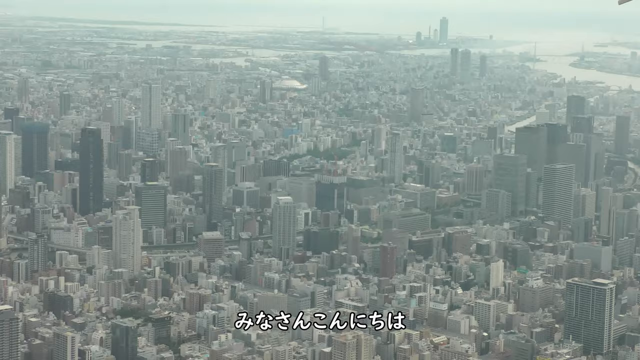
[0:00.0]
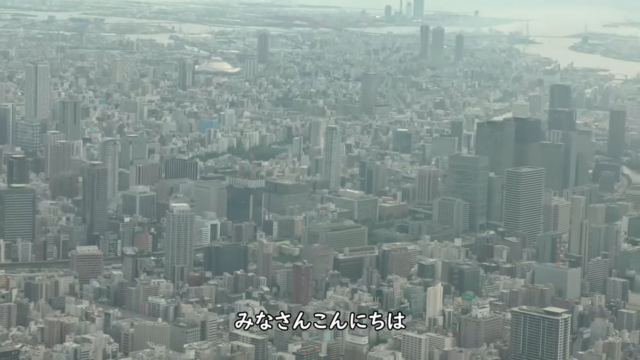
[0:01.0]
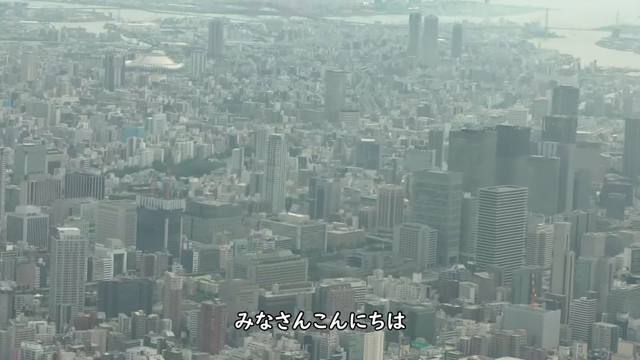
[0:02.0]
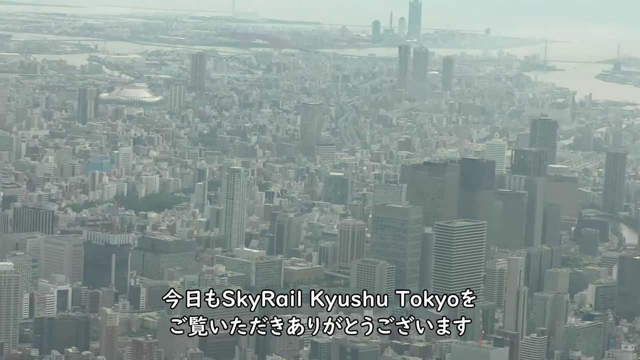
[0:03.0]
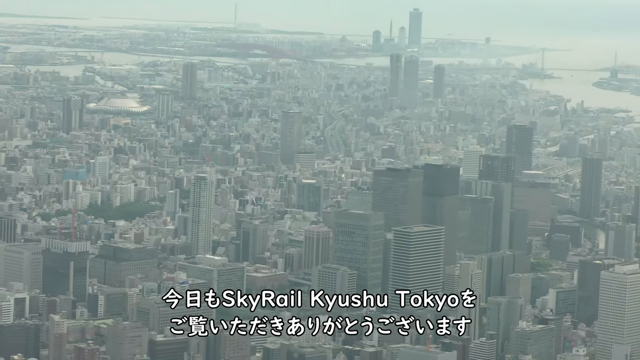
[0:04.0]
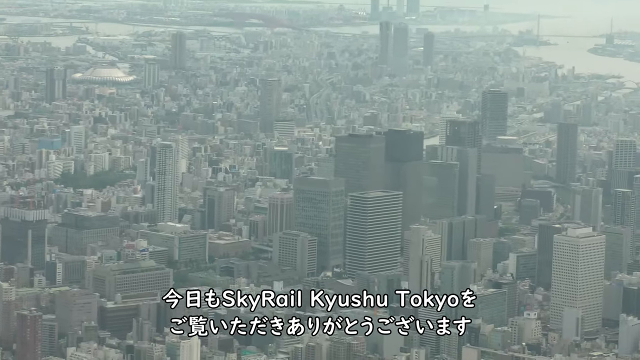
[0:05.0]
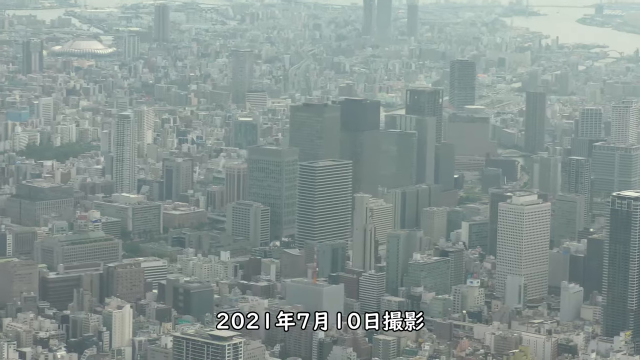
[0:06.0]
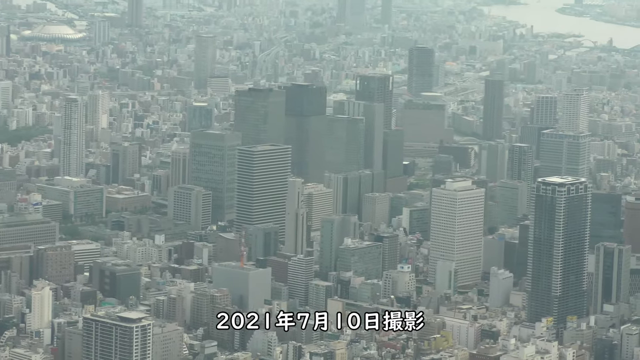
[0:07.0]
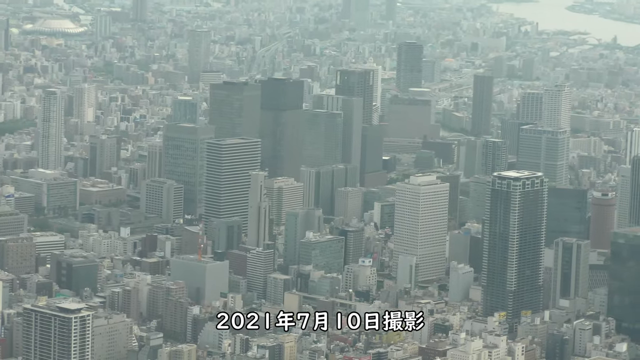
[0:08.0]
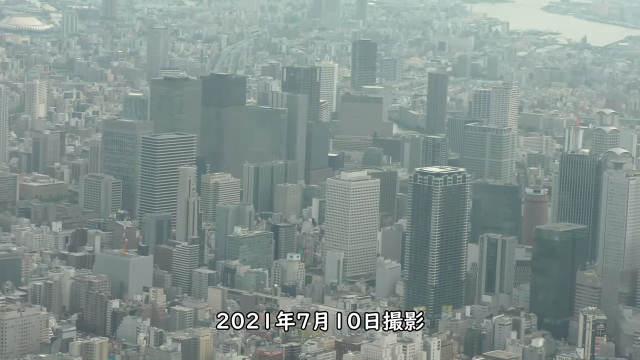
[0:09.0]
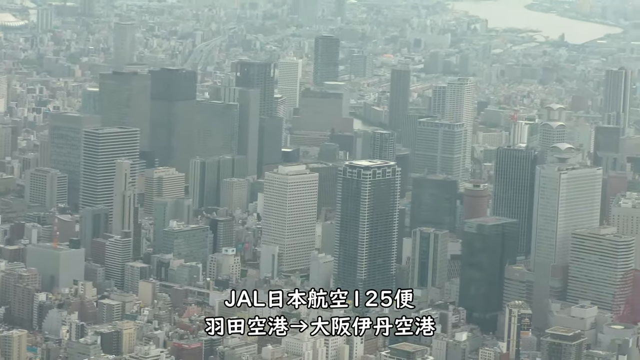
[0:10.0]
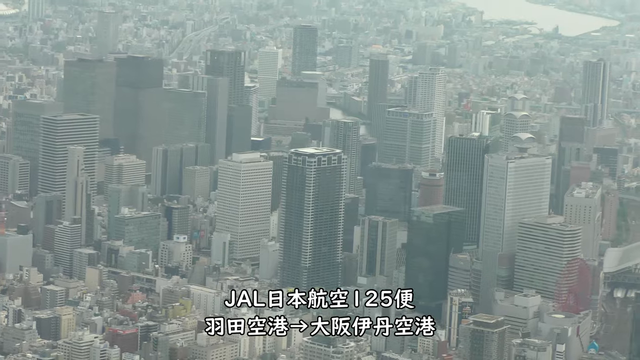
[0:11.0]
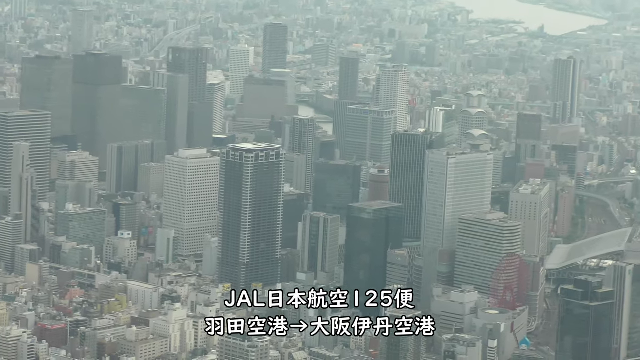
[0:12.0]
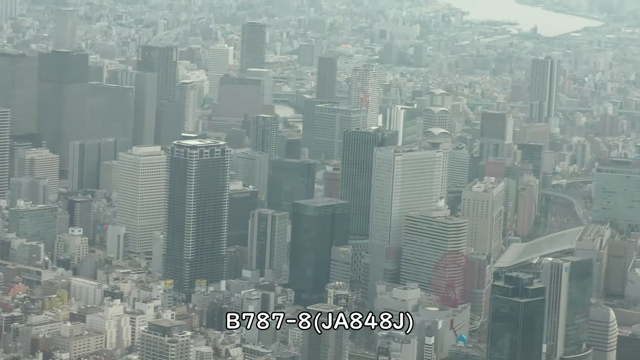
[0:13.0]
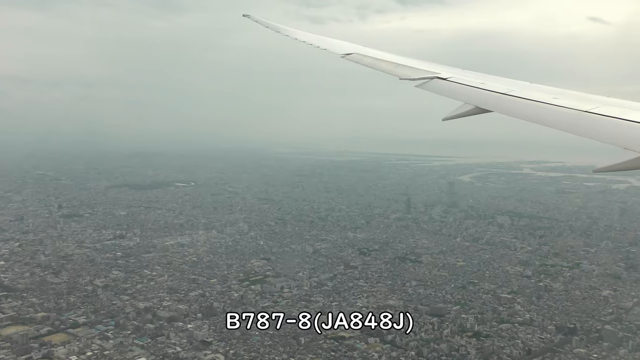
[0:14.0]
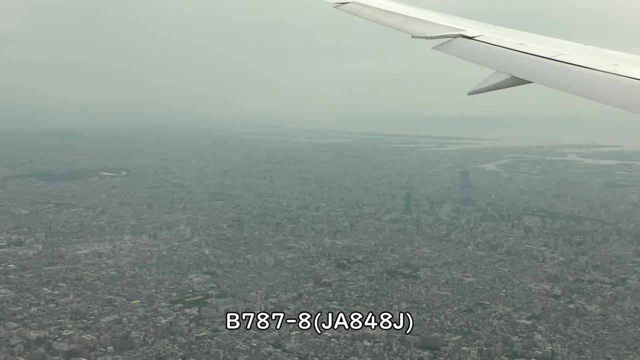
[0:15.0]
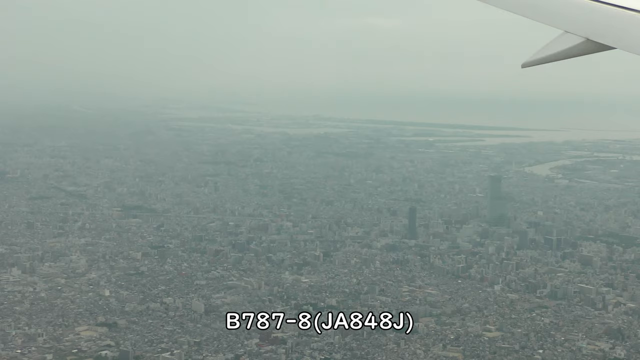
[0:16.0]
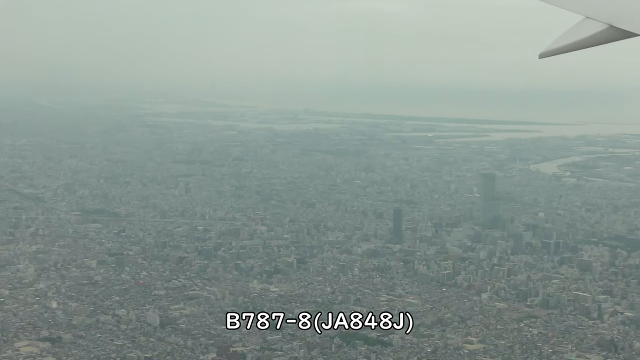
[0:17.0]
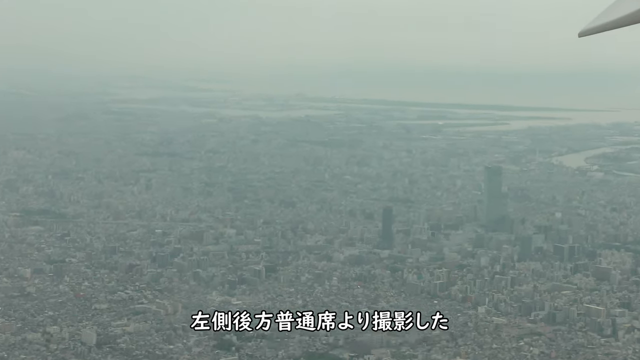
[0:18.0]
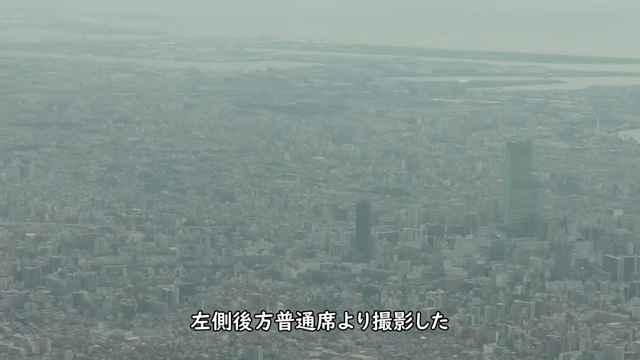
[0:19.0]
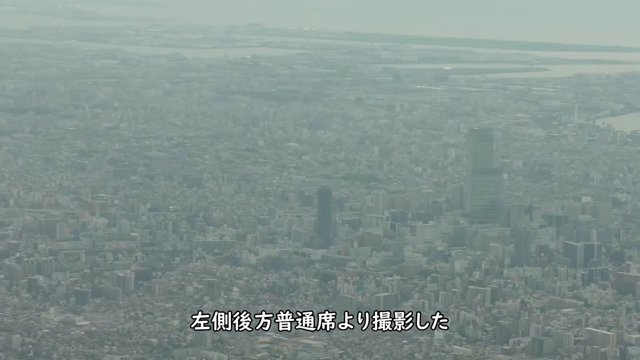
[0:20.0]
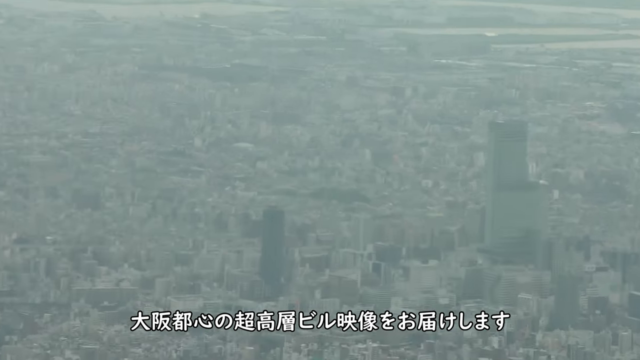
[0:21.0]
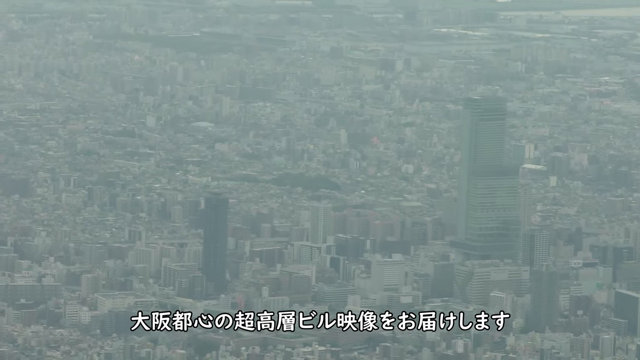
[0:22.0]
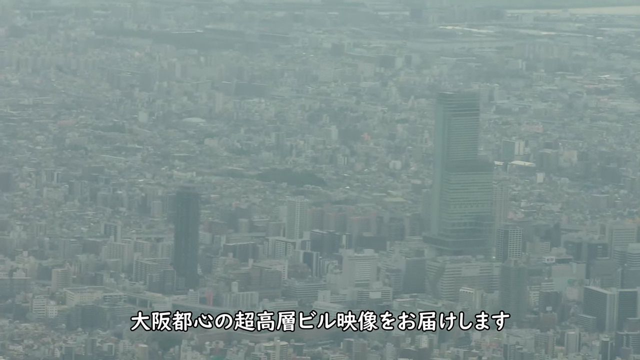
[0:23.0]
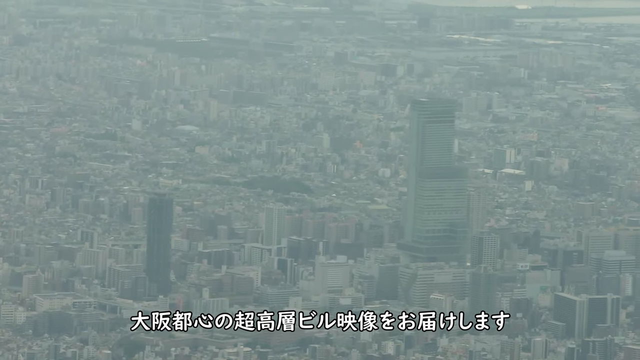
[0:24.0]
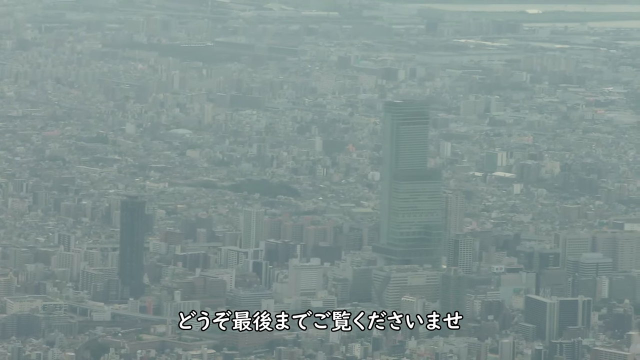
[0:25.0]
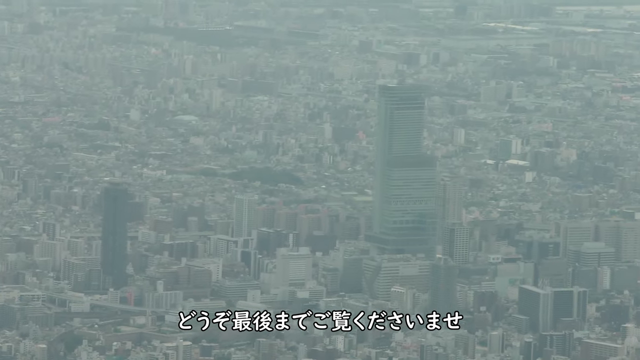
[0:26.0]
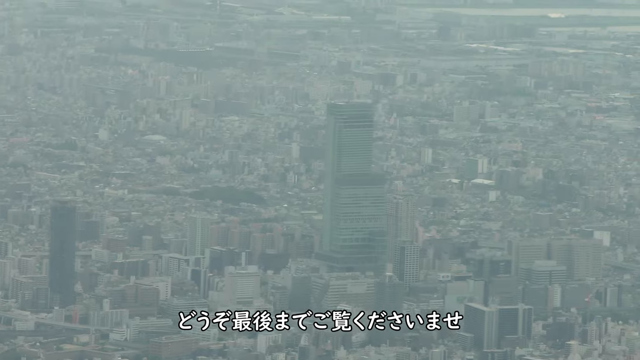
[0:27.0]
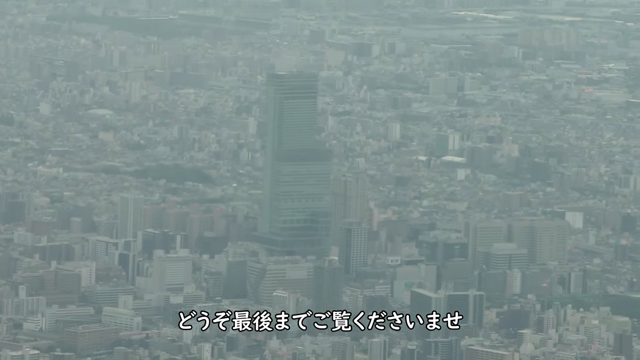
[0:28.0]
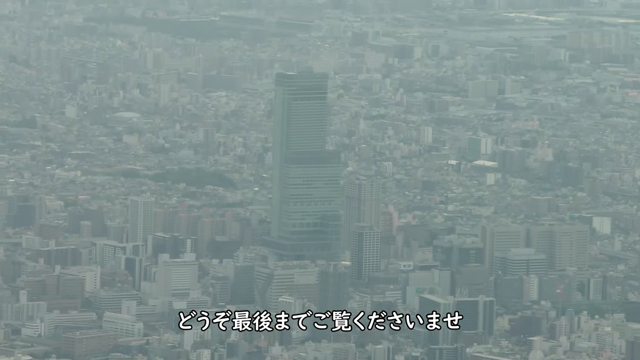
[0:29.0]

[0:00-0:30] What appears to be the downtown Tokyo, Japan skyline is seen, apparently filmed from a jetliner, since the white side of the jet's left wing is visible as it flies over the city. Traditional Japanese text runs along the bottom of the screen, followed by the year 2021. Some of the text is in English, such as "SkyRail", "Kyushu" and "Tokyo", in bold white letters. Also at the bottom is "B787-8 (JA848J)", likely the model number of the aircraft. The buildings vary in shape and size: some skyscrapers are quite tall with long windows, while others are wider. A river winds through the city, and a bridge is shown.